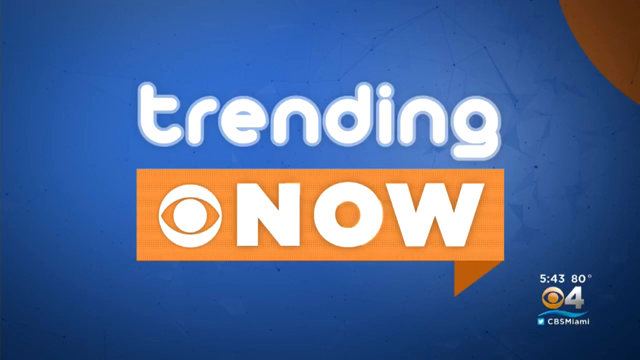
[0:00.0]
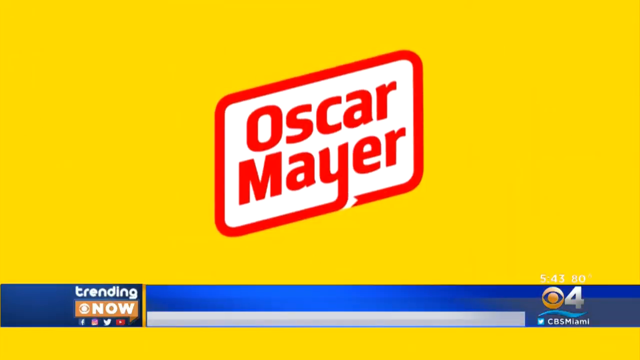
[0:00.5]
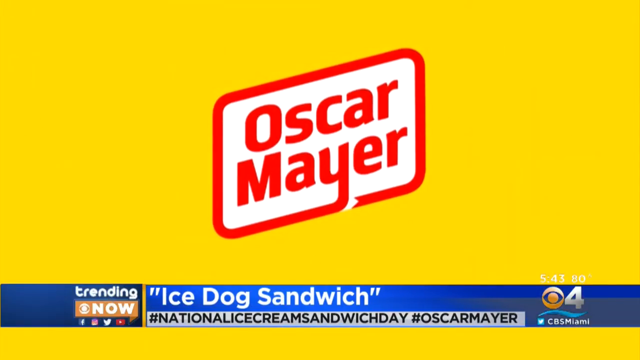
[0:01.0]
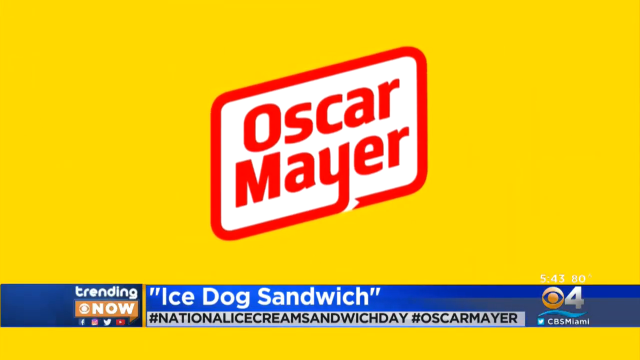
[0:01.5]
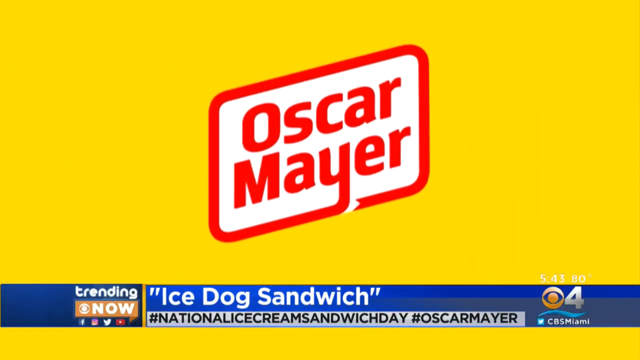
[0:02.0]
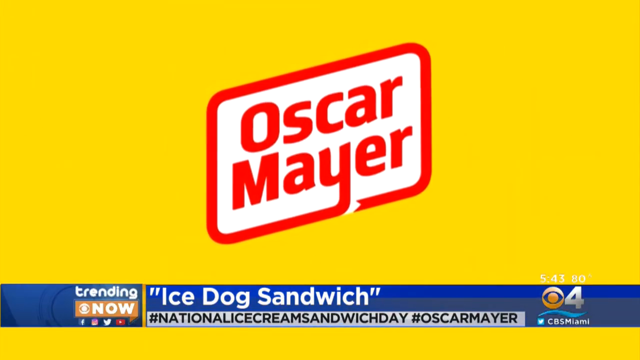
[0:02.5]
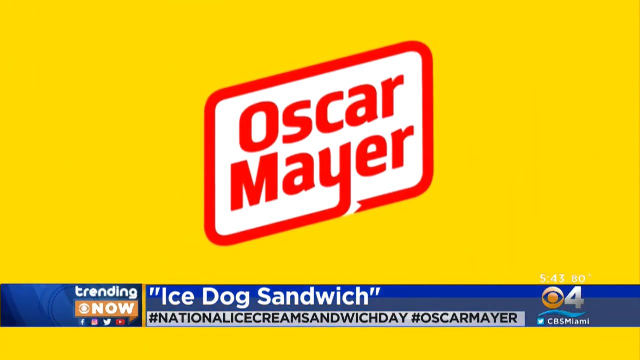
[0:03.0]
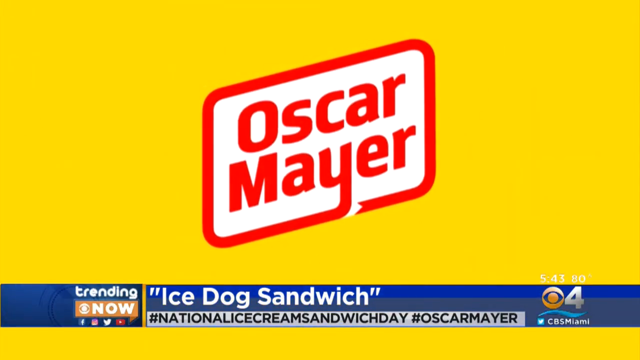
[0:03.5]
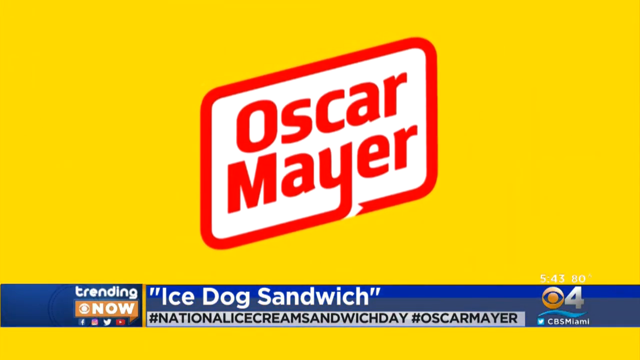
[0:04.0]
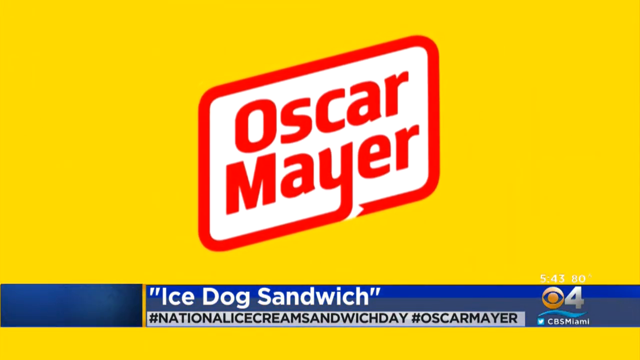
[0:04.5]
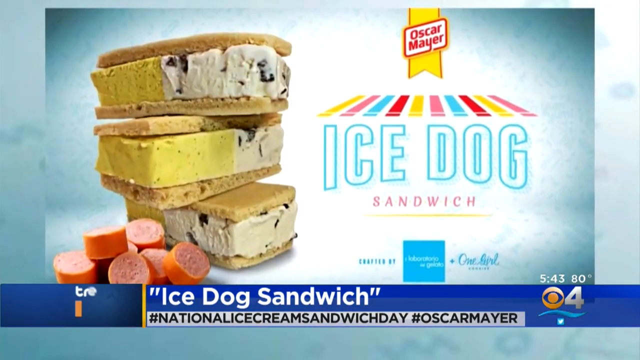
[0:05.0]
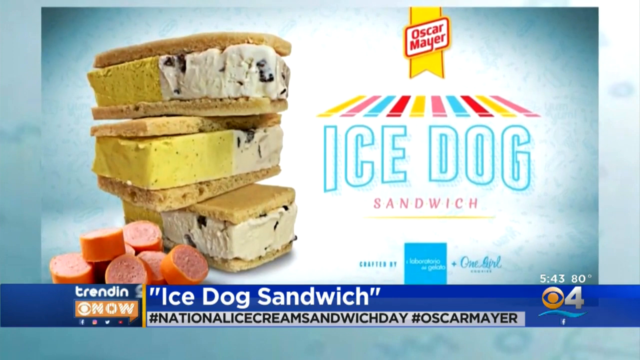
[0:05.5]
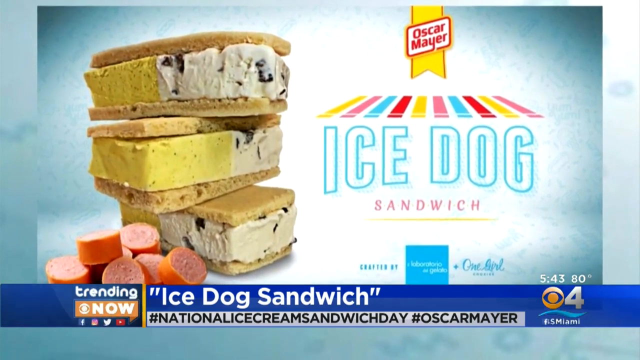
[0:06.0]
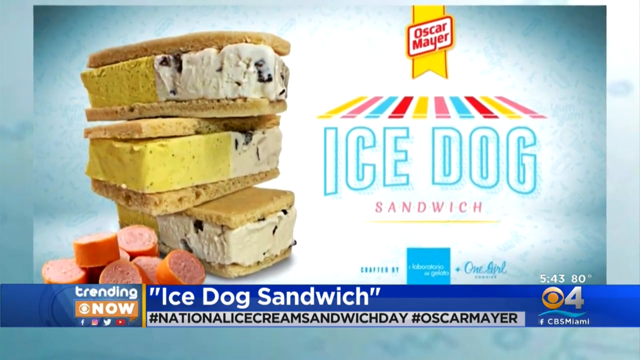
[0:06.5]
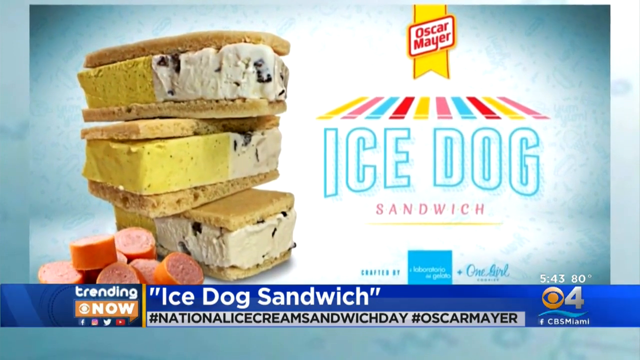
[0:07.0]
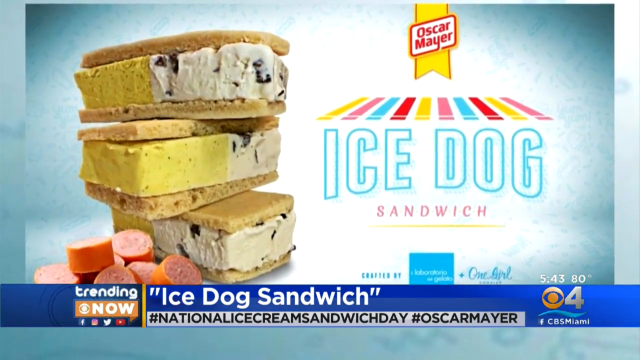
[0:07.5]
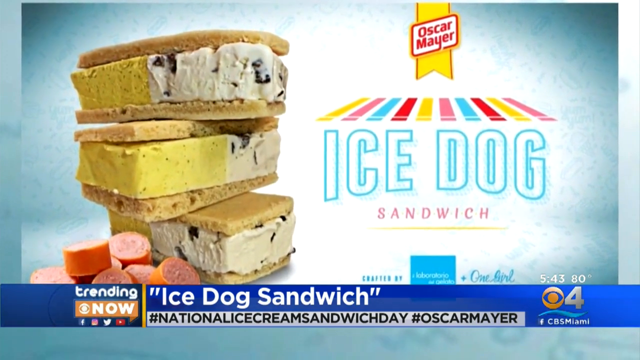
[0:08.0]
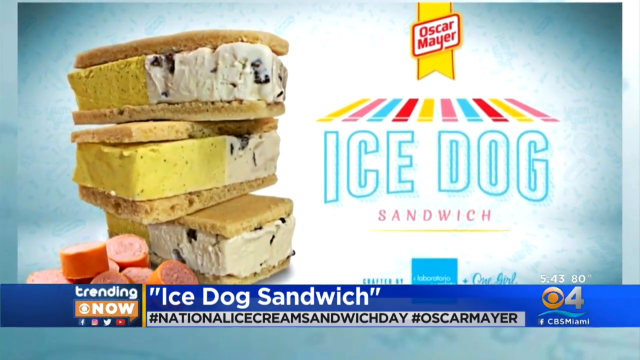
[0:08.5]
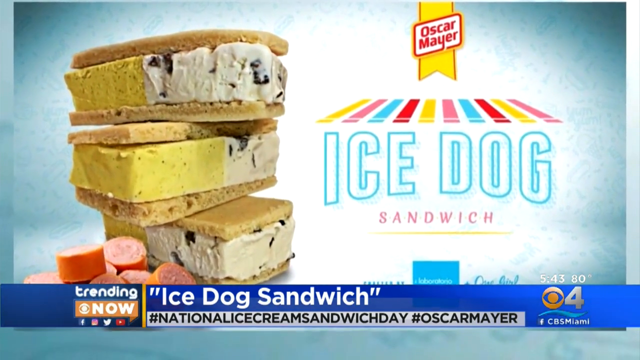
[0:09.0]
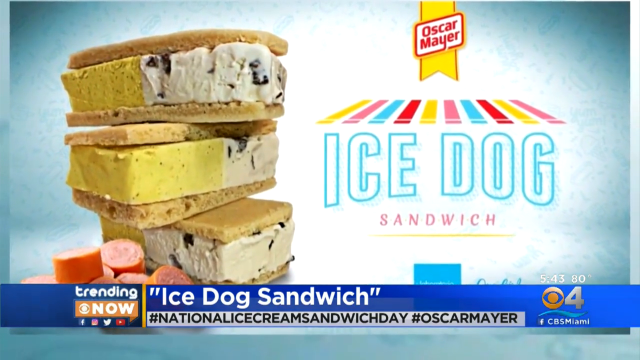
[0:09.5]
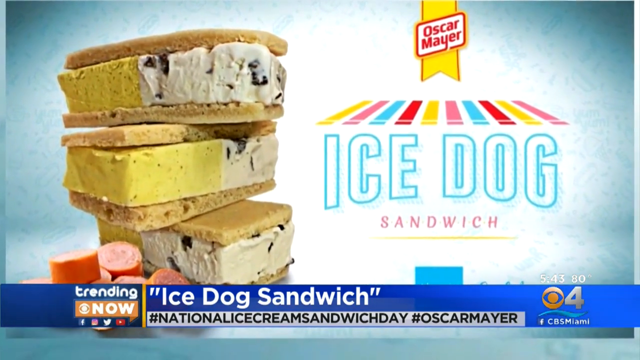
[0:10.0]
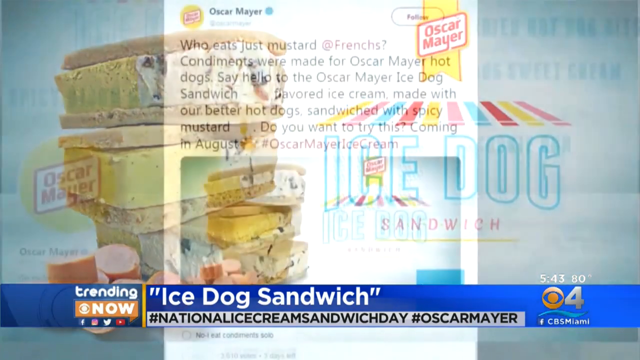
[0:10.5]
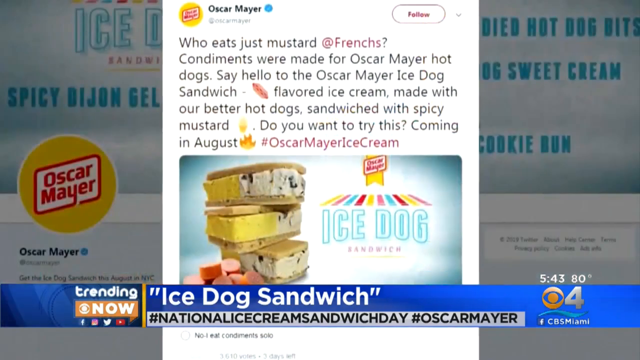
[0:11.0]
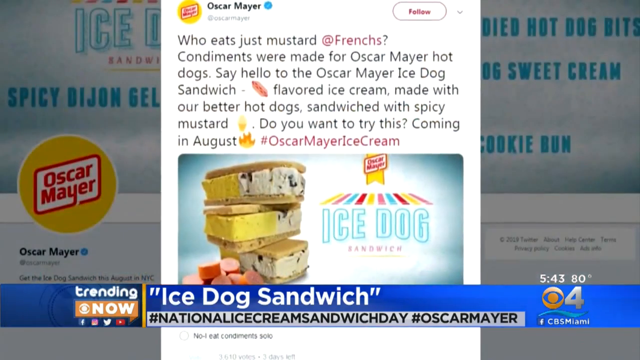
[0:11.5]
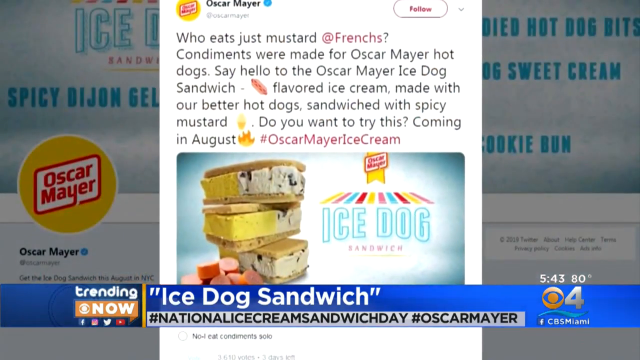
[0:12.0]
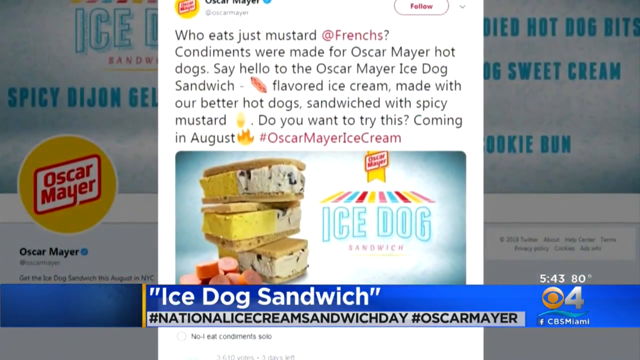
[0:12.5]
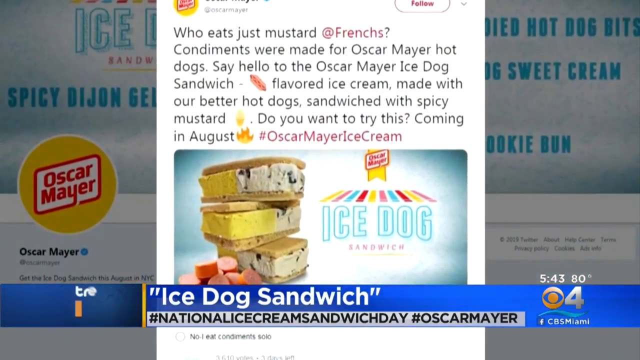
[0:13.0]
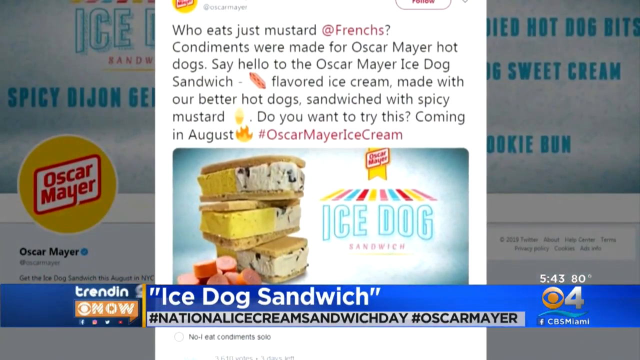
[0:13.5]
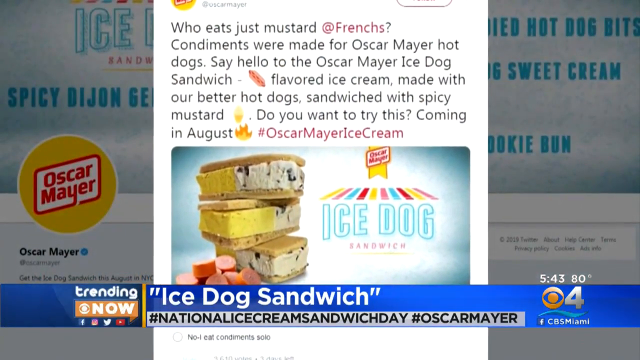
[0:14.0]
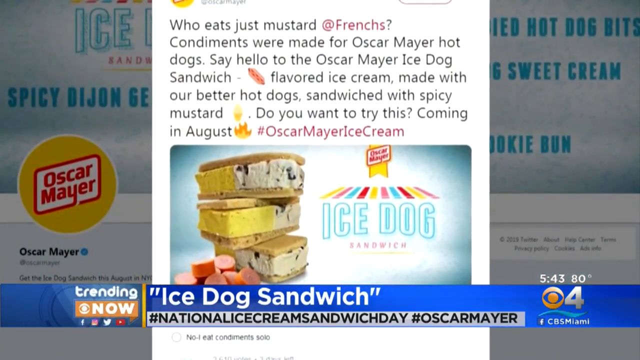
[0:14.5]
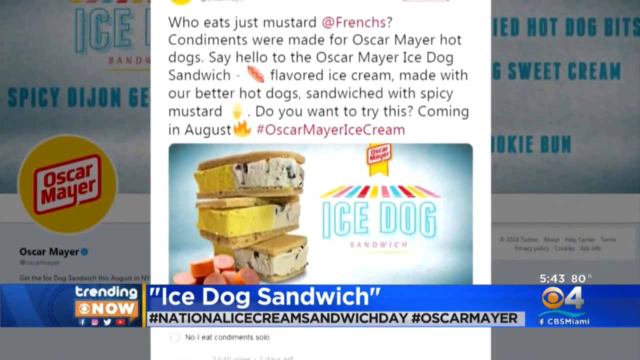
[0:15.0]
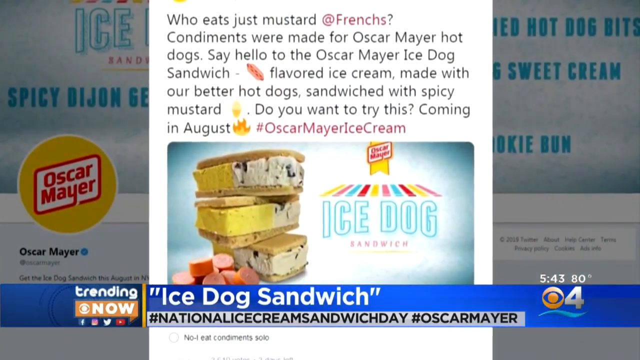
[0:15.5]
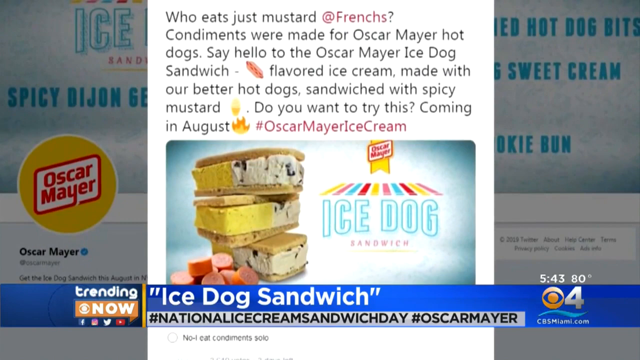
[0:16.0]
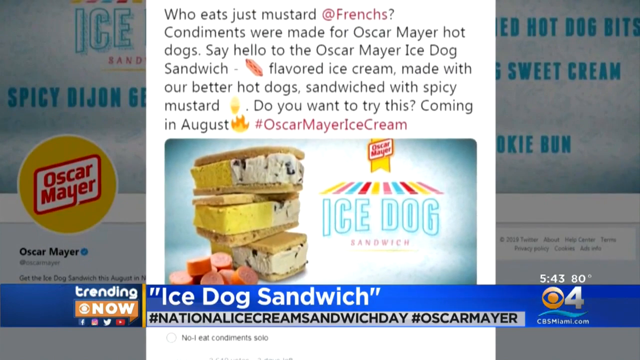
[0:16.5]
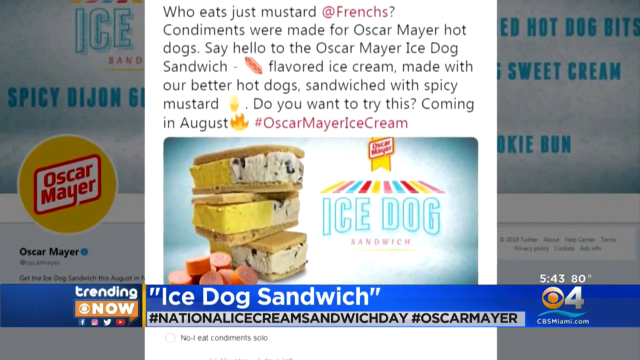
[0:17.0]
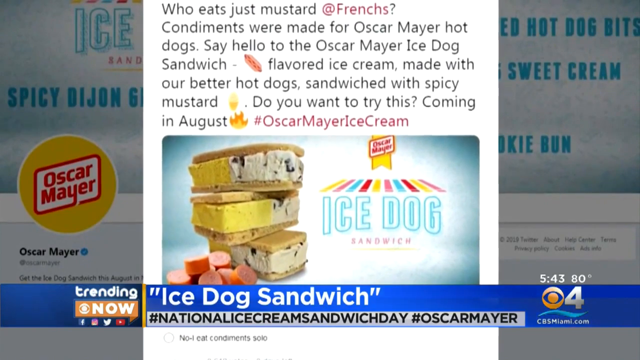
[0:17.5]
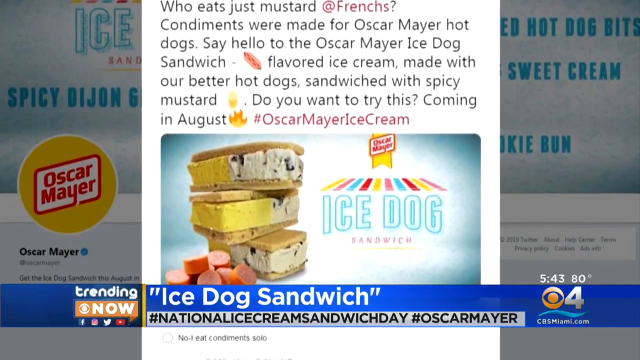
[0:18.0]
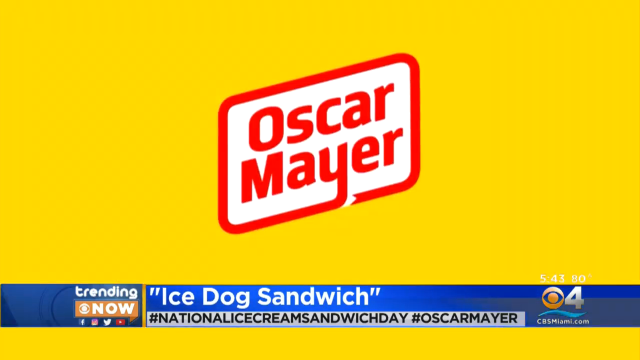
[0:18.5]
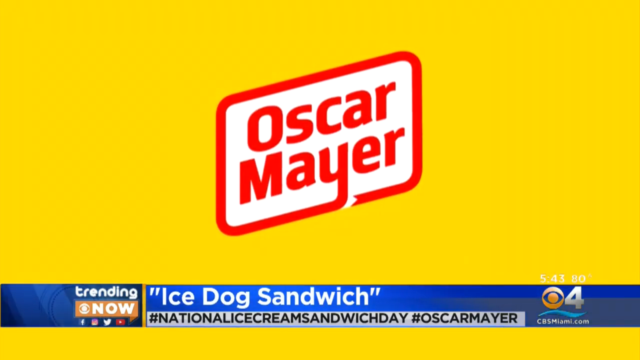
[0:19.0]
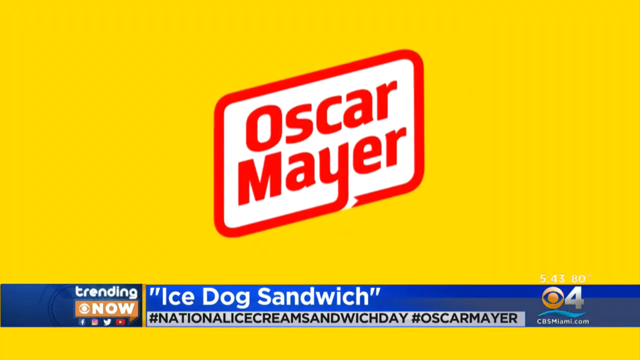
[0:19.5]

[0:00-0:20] The video opens on a screen reading "Trending Now," with the CBS logo in the left corner. It then transitions to an Oscar Mayer logo. A news heading reads "iStock Sandwich" and "International Ice Cream and Sandwich Day" with a hashtag. The scene stays focused on Oscar Mayer and on the iStock Sandwich product it has recently introduced, displaying a picture of an iStock Sandwich with ice cream in the middle and biscuits on the top and bottom. Next comes an Oscar Mayer social media post about condiments, including the lines "Condiments were made for Oscar Mayer hot dogs. Say hello to Oscar Mayer iStock Sandwich" and "Do you want to try this coming in August?" The broadcast is on CBS.